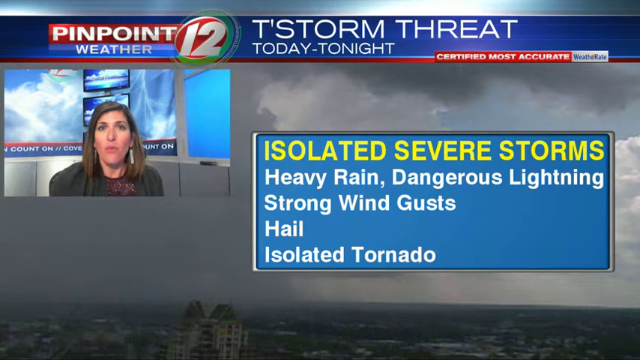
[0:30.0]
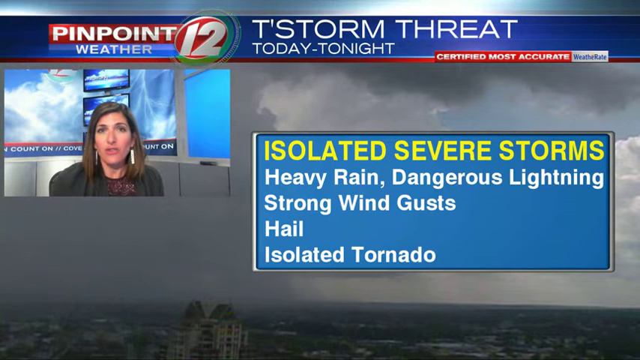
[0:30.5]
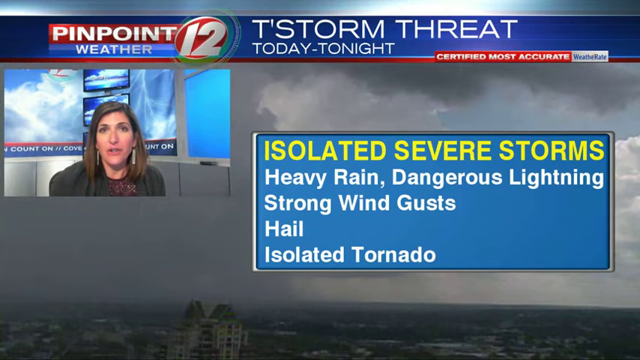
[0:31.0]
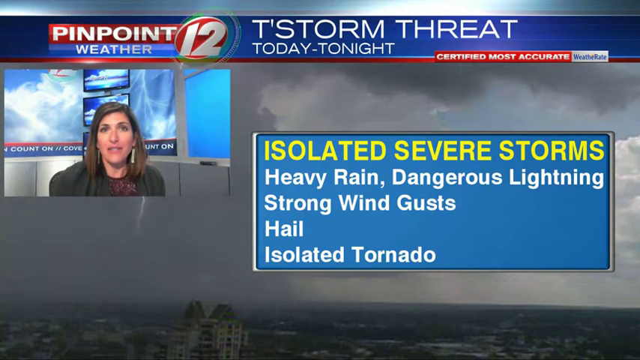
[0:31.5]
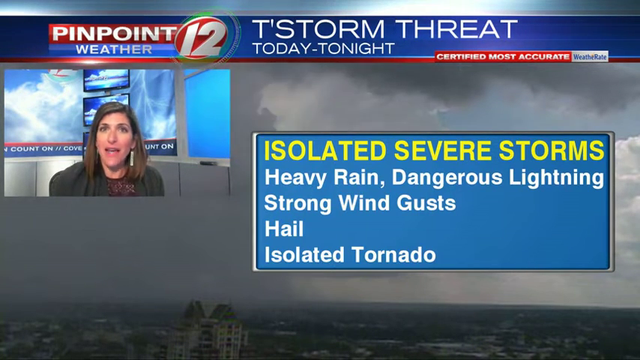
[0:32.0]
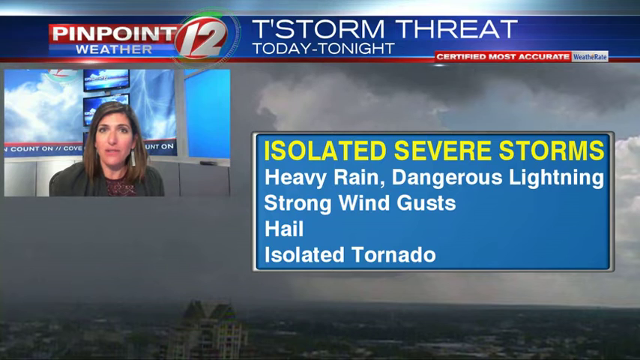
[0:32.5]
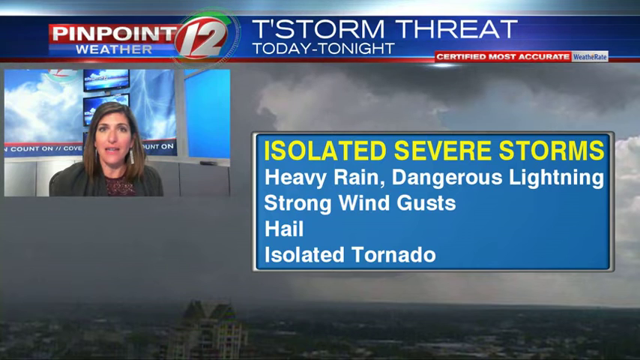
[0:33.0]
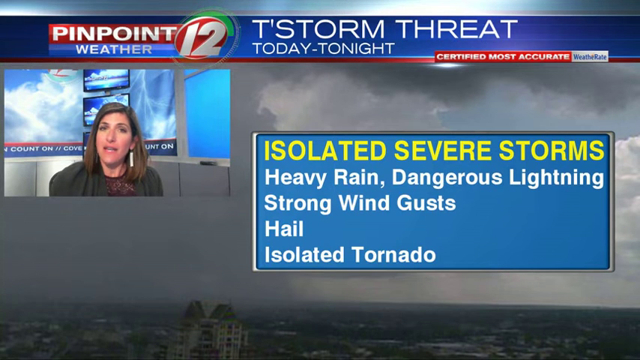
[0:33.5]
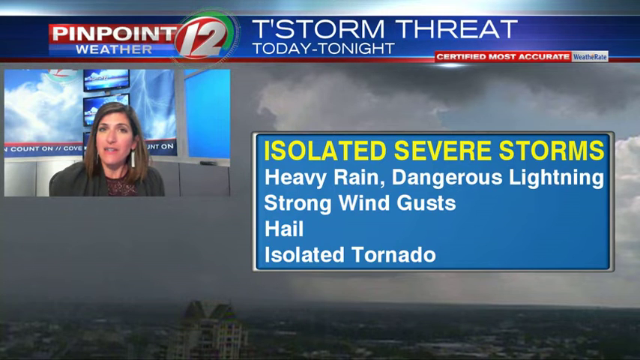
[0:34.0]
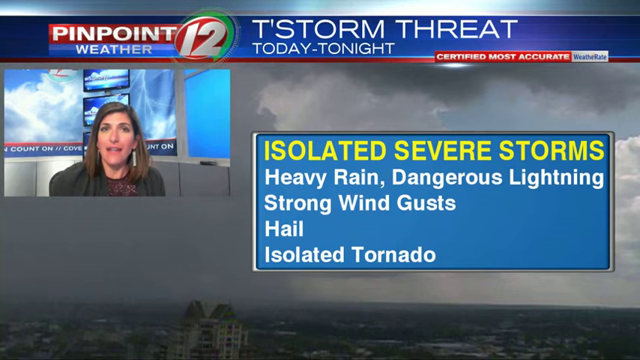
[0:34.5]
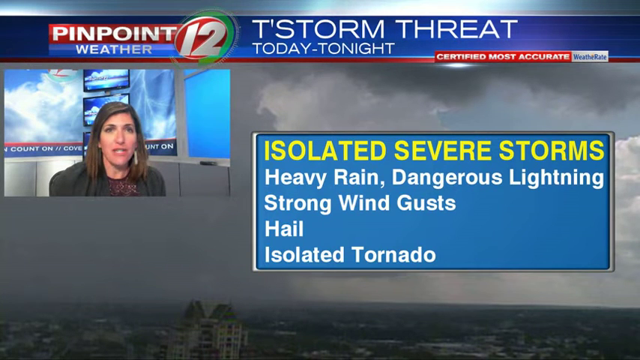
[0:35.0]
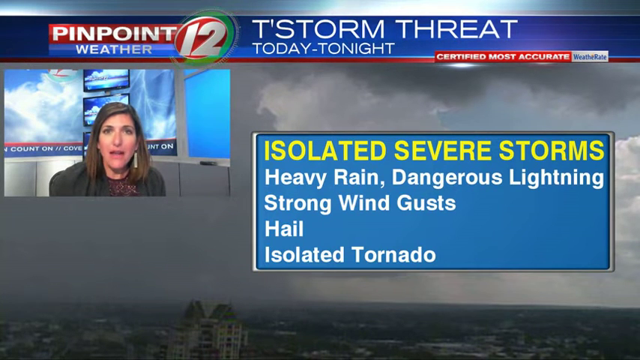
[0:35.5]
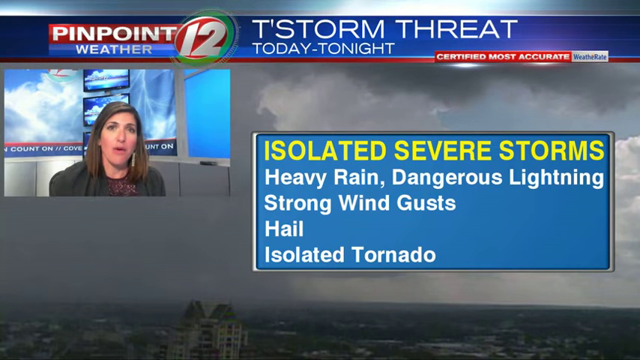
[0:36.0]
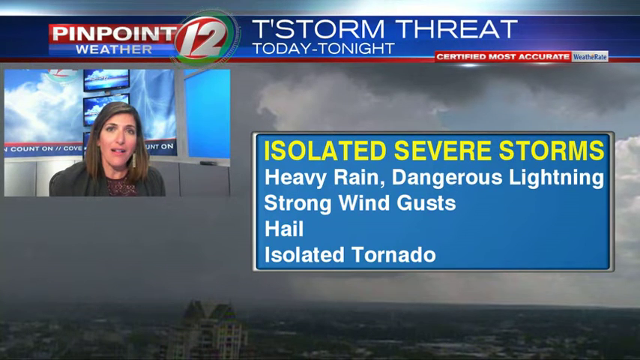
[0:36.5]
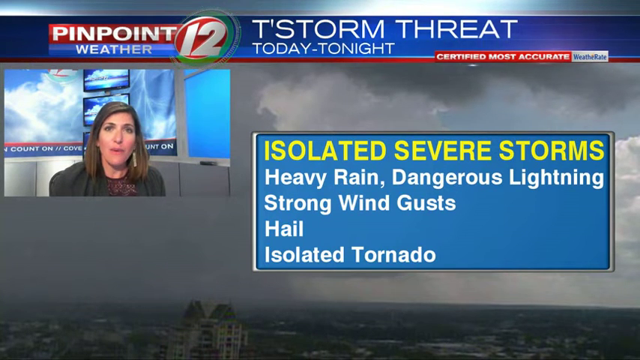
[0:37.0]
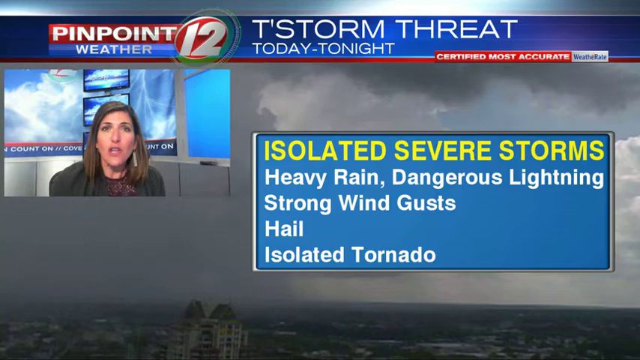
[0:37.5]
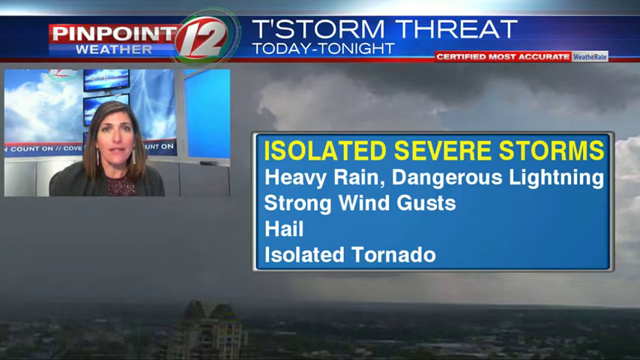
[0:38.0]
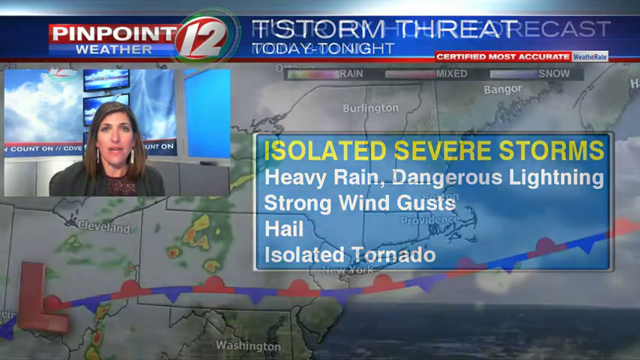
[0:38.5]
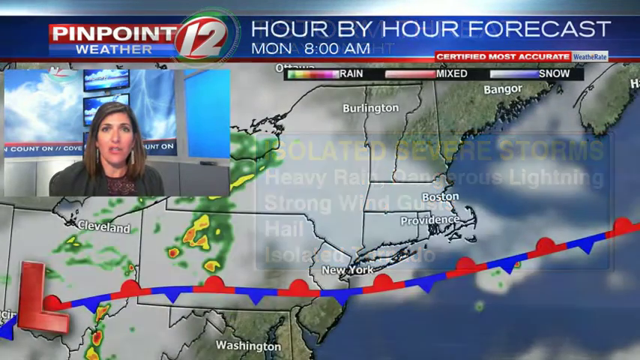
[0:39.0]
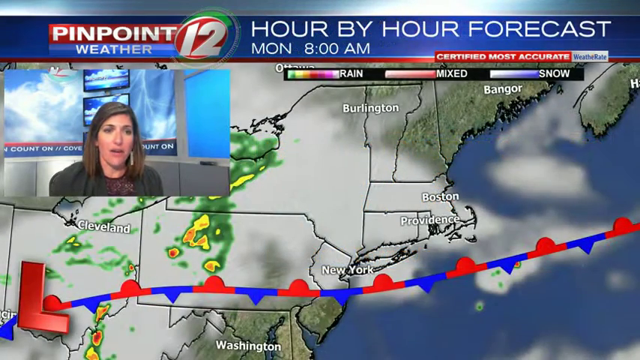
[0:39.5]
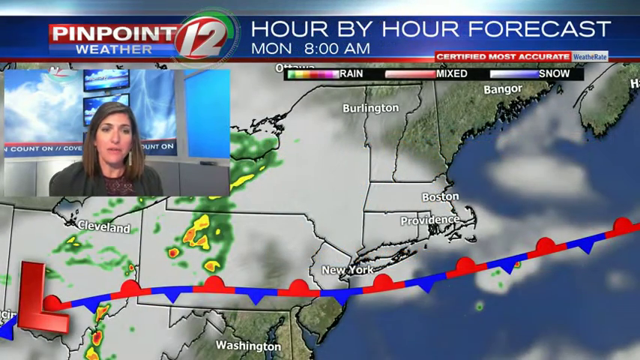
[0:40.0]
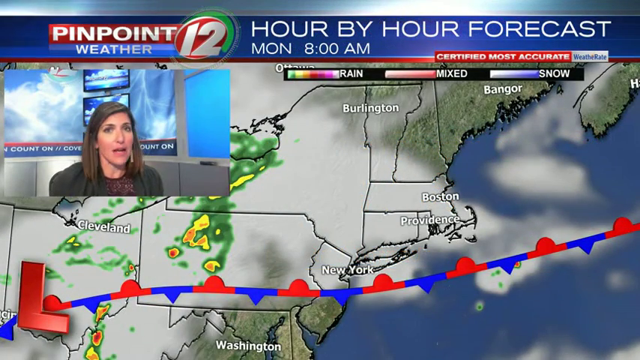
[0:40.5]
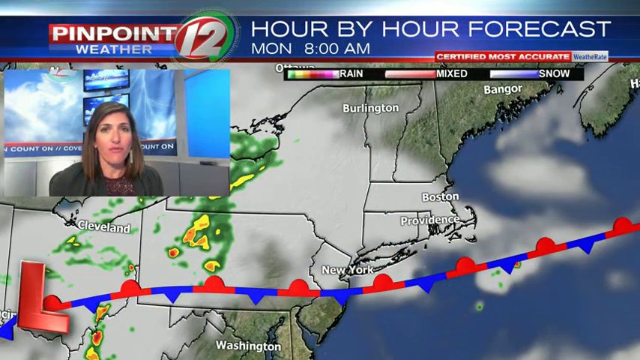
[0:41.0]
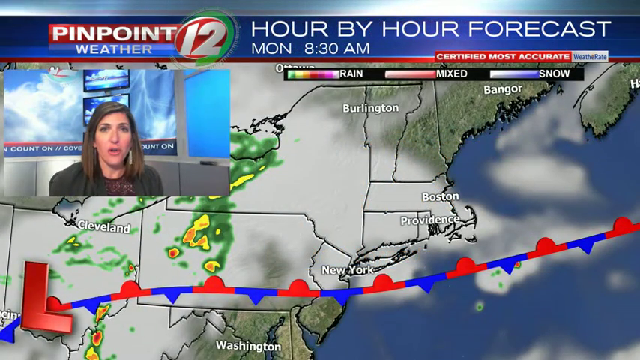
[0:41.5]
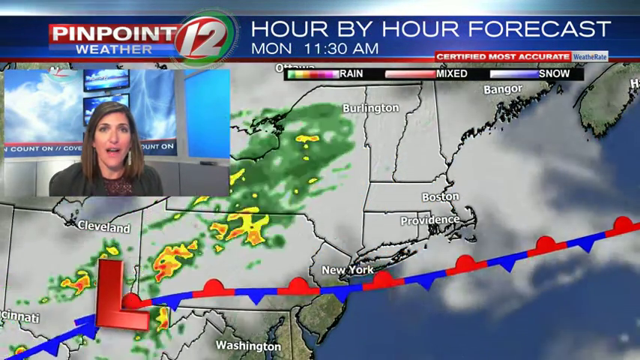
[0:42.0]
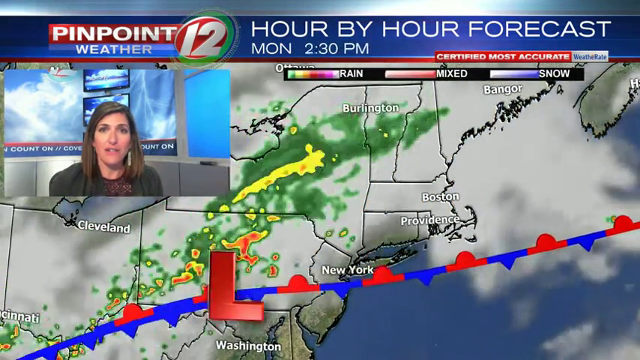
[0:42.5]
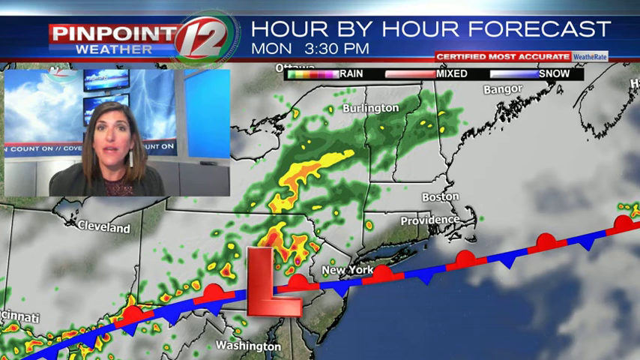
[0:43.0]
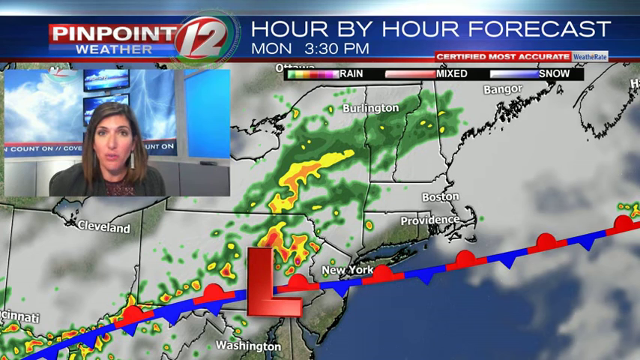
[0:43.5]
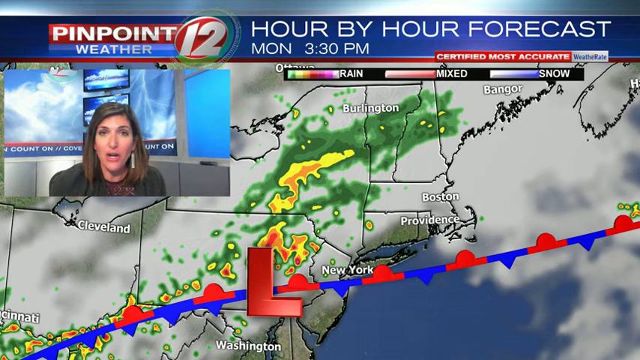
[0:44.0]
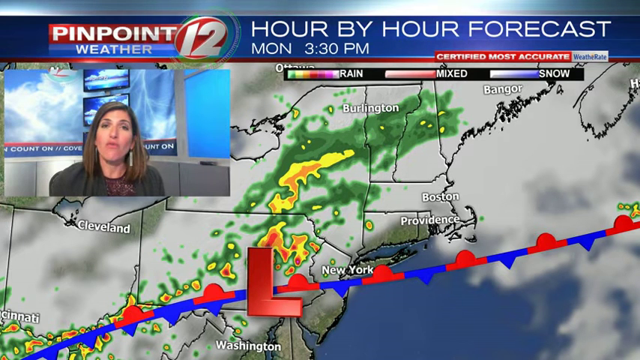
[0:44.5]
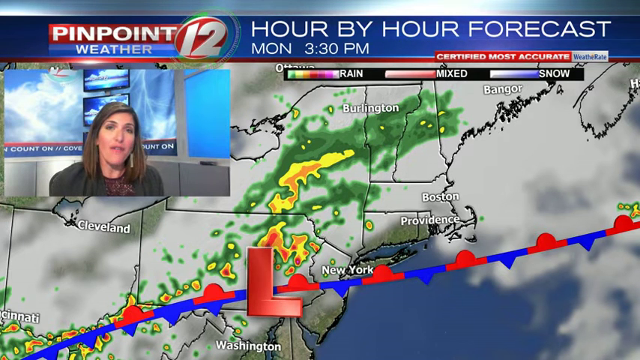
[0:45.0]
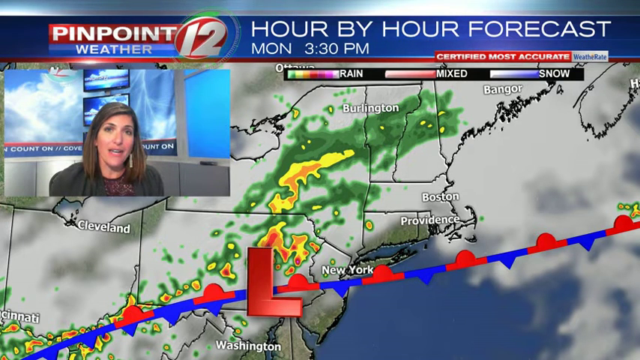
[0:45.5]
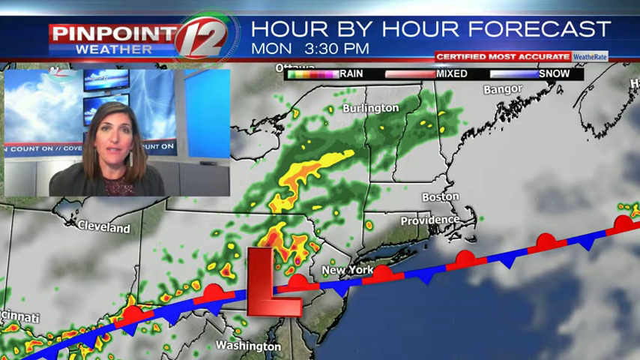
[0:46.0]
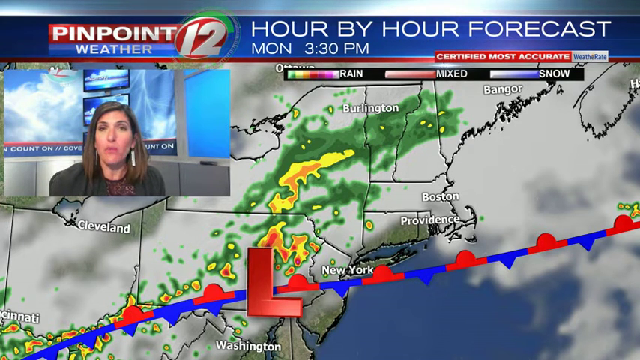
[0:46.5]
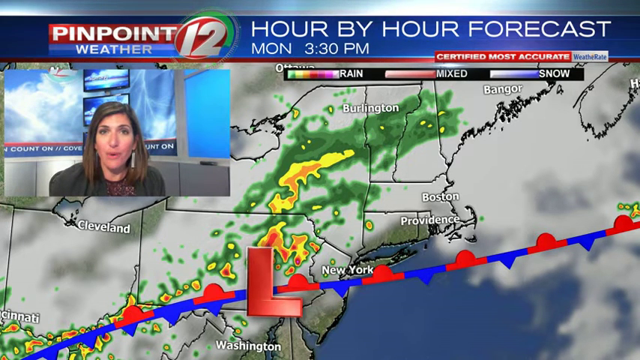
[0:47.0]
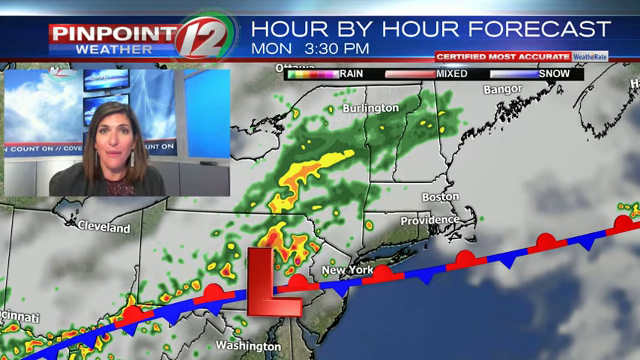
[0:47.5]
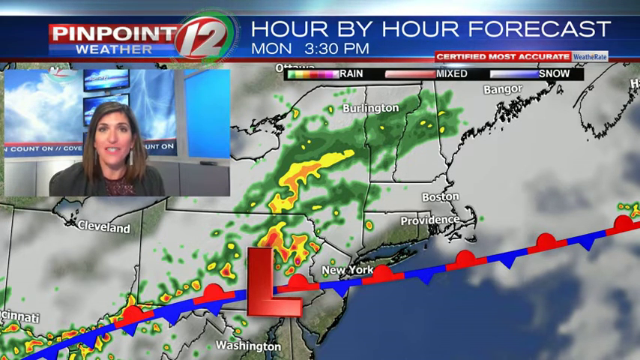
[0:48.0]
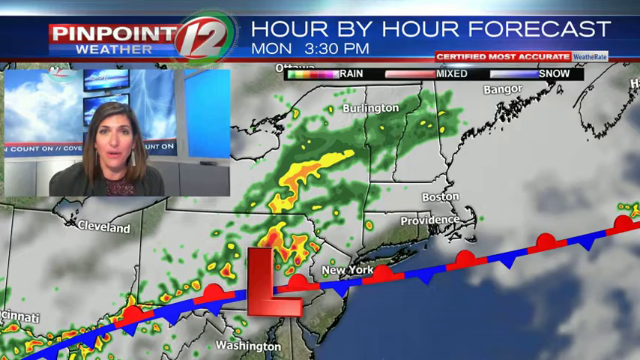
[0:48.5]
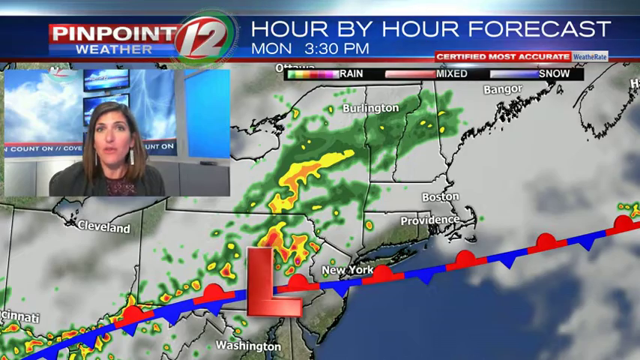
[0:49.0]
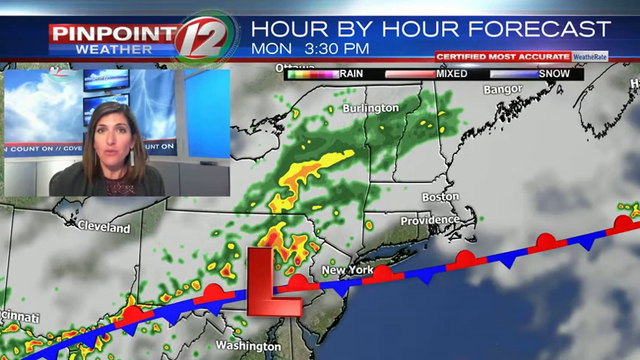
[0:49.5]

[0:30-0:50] The Pinpoint 12 weather forecast continues, with the frame of the lady in the newsroom, the meteorologist, still visible in the top left. Text reads "T-storms threat today, tonight," followed by "isolated severe storms," "strong wind gusts" and "isolated tornado." Dark gray clouds form in the backdrop, and lightning appears. A map then shows an hour-by-hour forecast for Monday 8 a.m., with color codes for rain, mixed and snow. Places such as Boston, Providence, New York, Birmingham and Cleveland are covered by a cloudy, gray, smoke-like feature. In the middle, around Cleveland, a green and yellowish substance moves toward the left, not toward the right where the ocean is. A big capital L in bold red is on the screen.